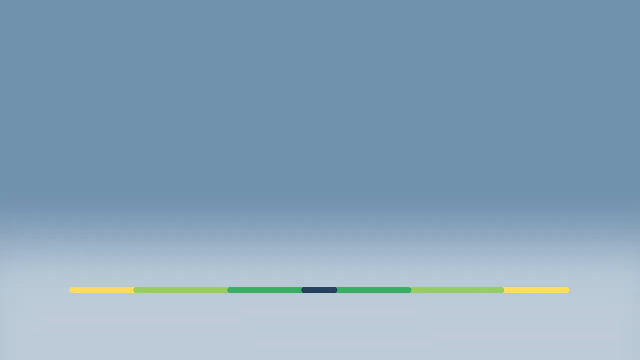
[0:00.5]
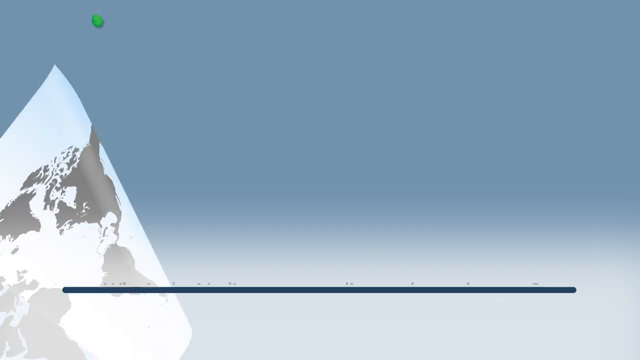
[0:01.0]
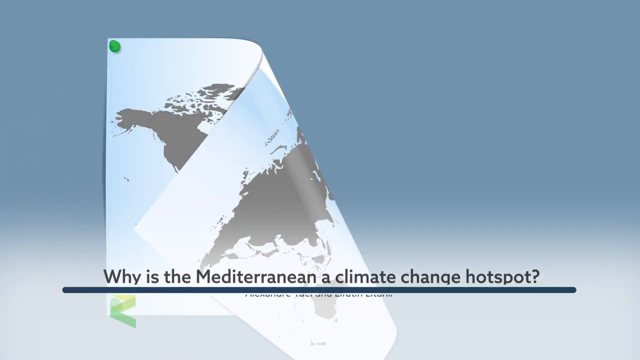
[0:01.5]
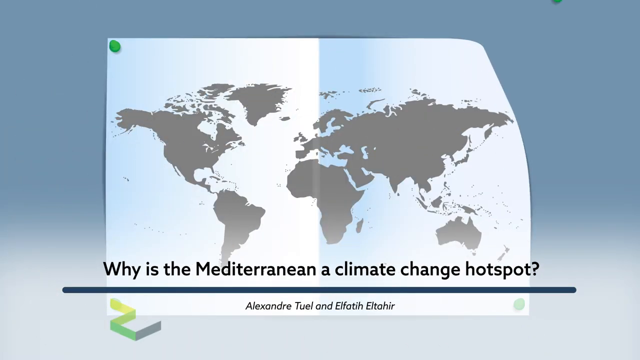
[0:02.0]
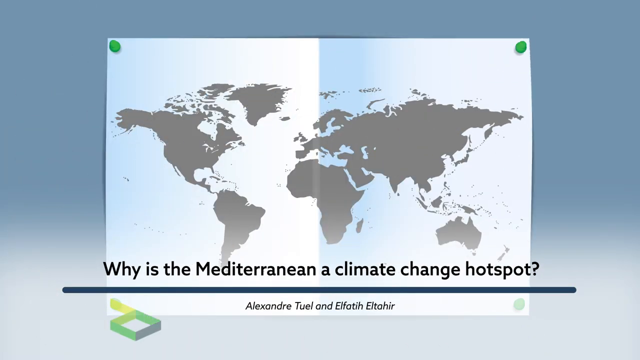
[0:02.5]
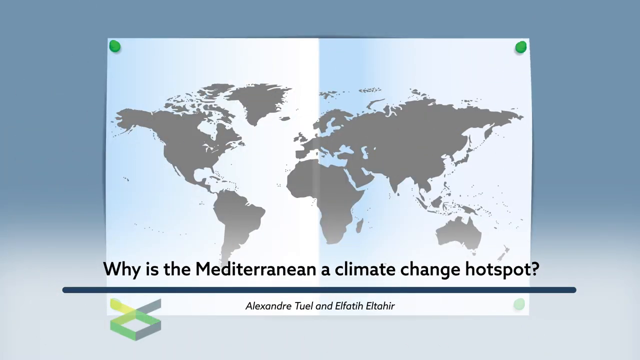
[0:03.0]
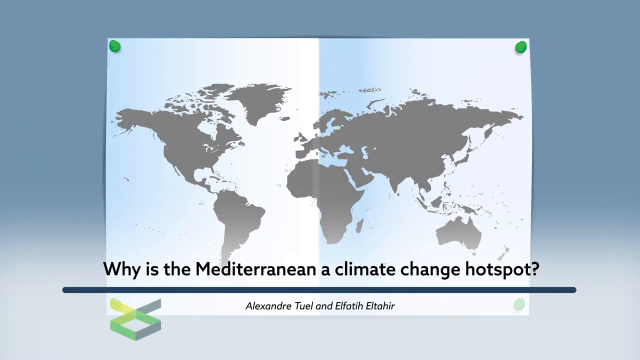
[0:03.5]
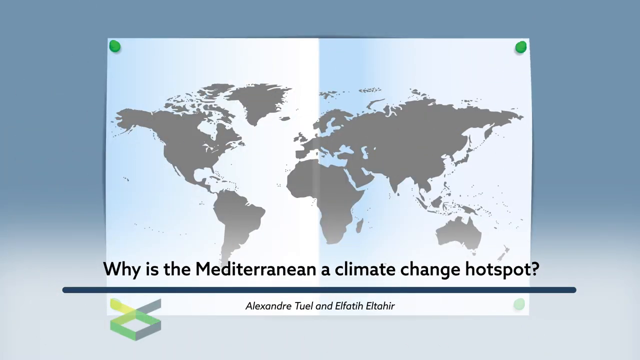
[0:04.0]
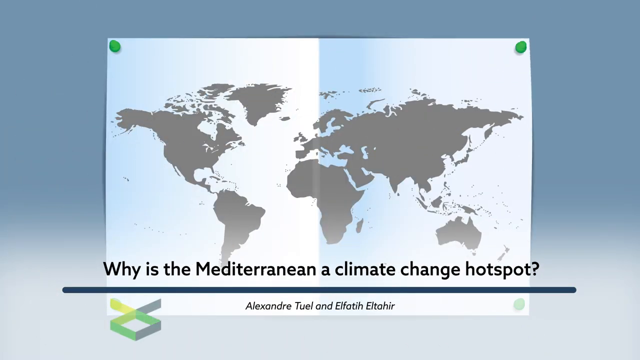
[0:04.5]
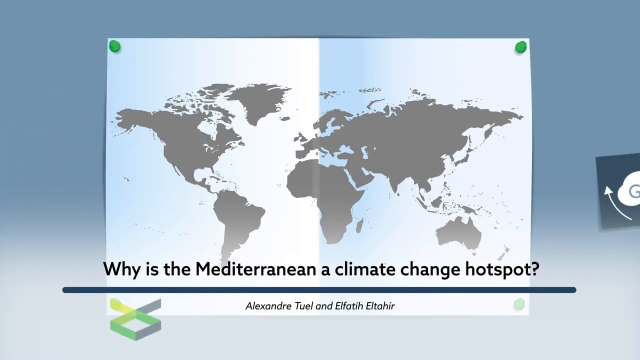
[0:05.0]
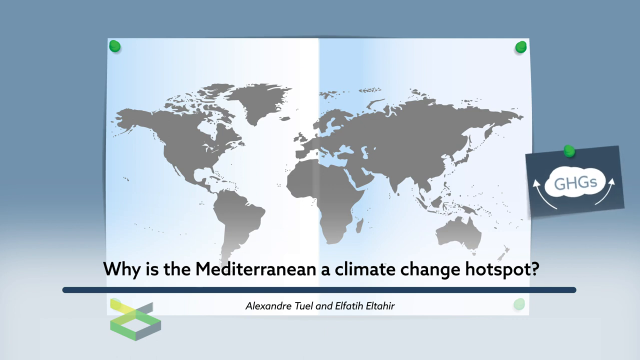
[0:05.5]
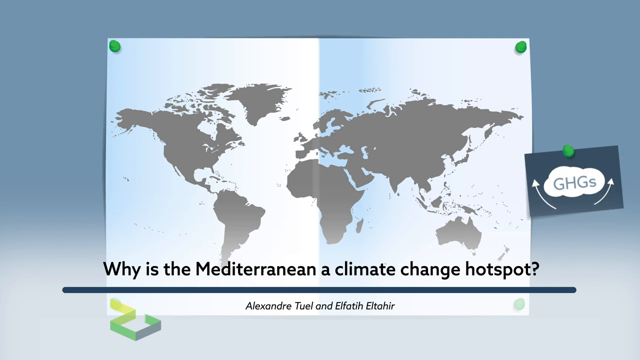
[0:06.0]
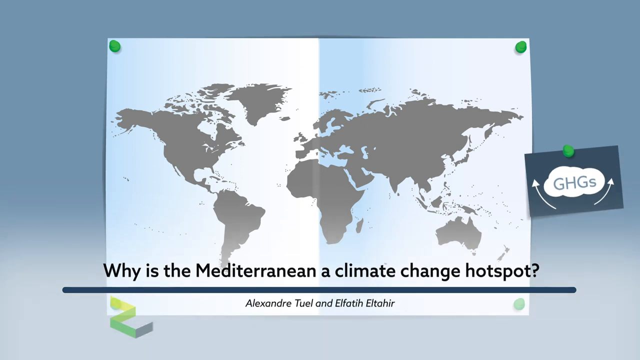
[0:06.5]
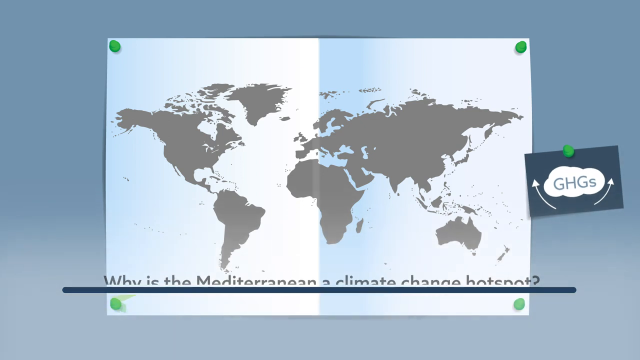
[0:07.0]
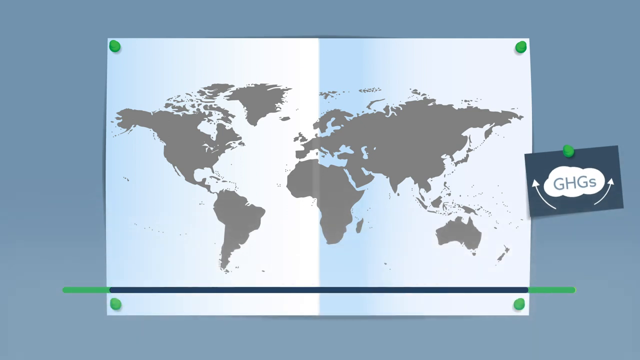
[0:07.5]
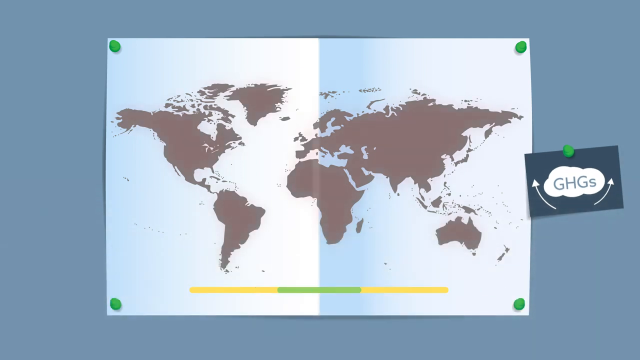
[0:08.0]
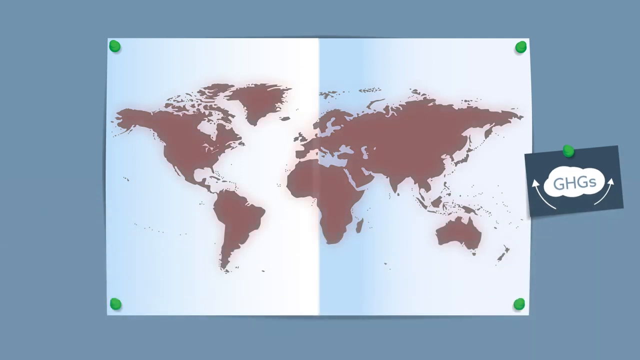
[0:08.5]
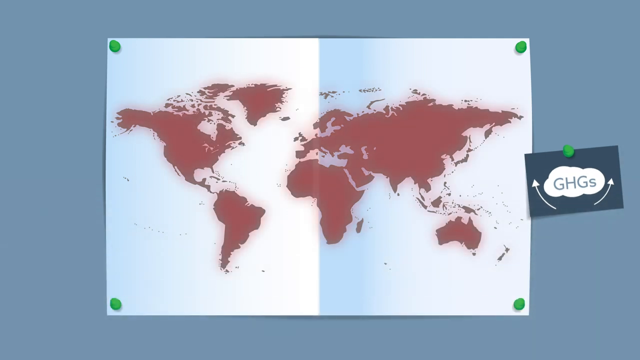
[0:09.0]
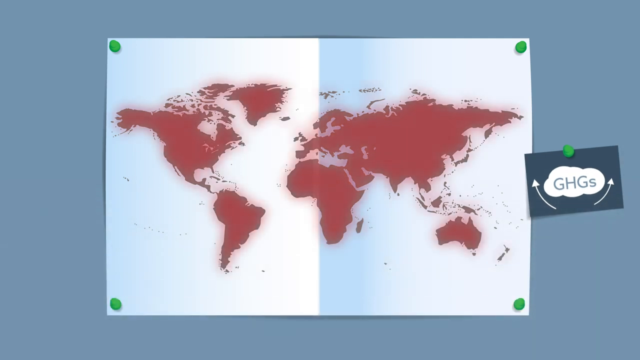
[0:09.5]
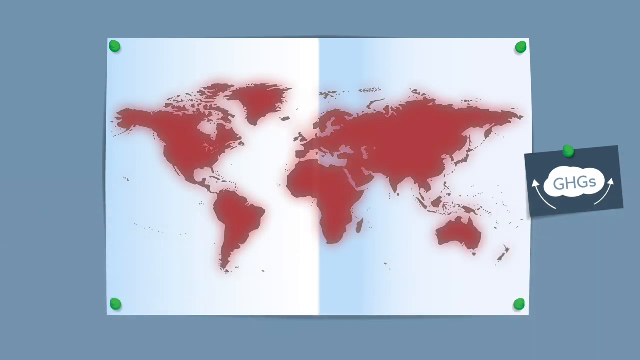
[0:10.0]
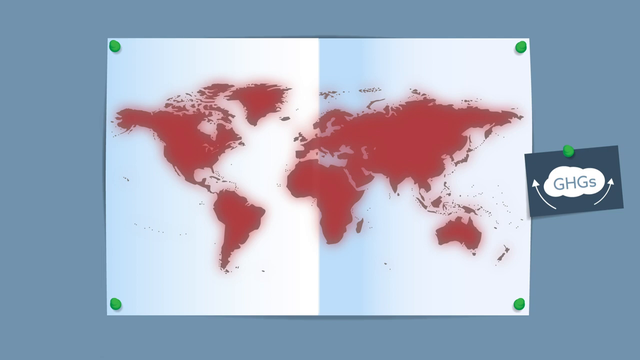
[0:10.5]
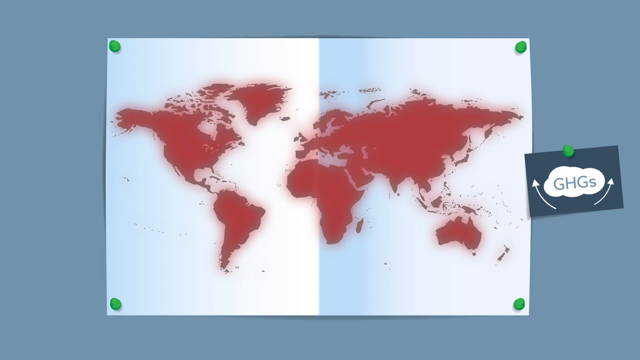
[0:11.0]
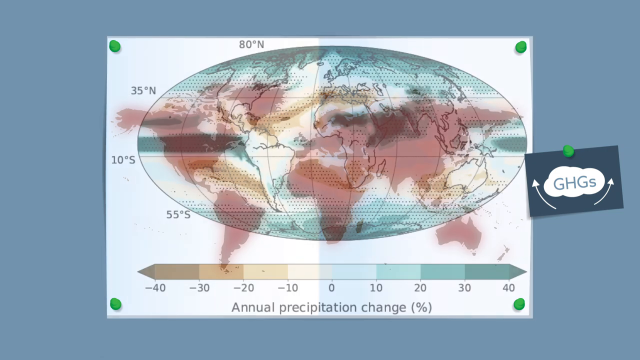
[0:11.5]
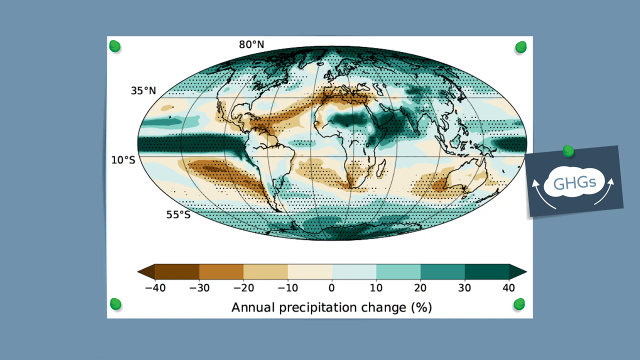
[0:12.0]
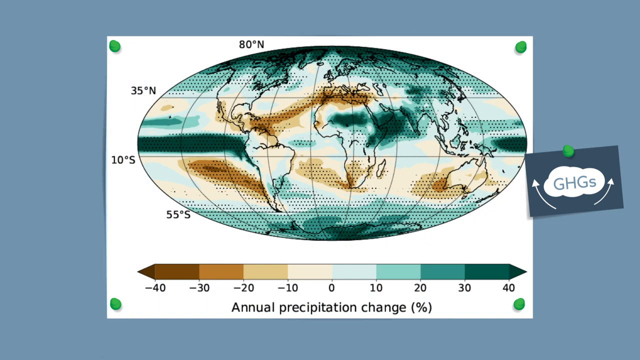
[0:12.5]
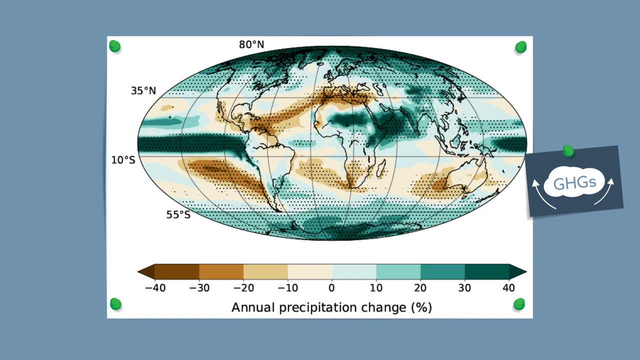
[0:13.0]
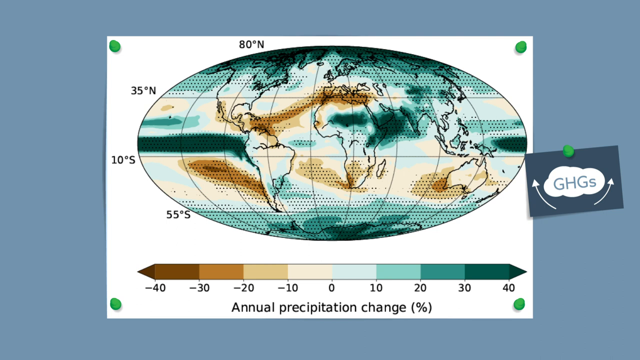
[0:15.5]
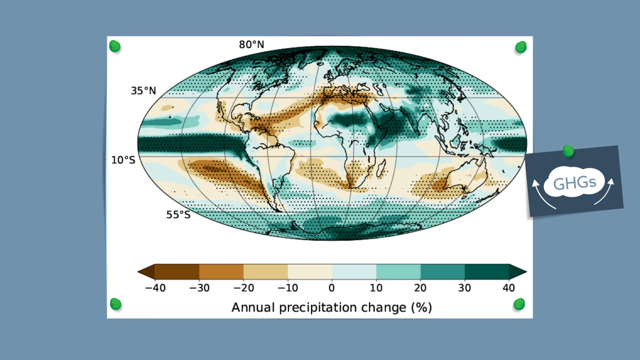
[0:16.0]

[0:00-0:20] Against a light blue background, a world map appears in the center, with a caption at the bottom that reads "Why is the Mediterranean a climate change hotspot?" The continents on the map are gray and the oceans are light blue. A small sign reading "GHGs" is posted on the right side, next to the world map. The continents turn red, and then the map changes to an oval map of the world. At the bottom is a color graph of annual precipitation change in percent. The map is colored in places: some areas are dark blue and others are brown and light brown. The dark blue areas are those with the highest rainfall, and the brown and tan areas are those with the least rainfall, which look like droughts.